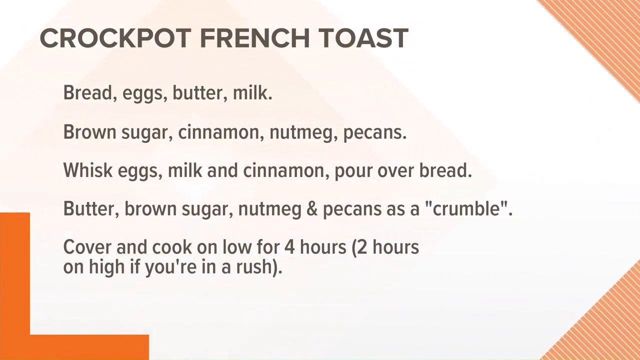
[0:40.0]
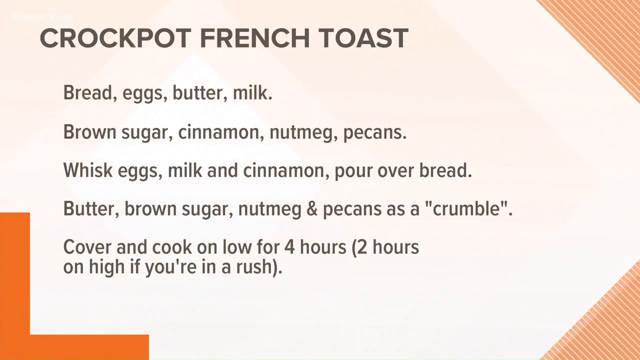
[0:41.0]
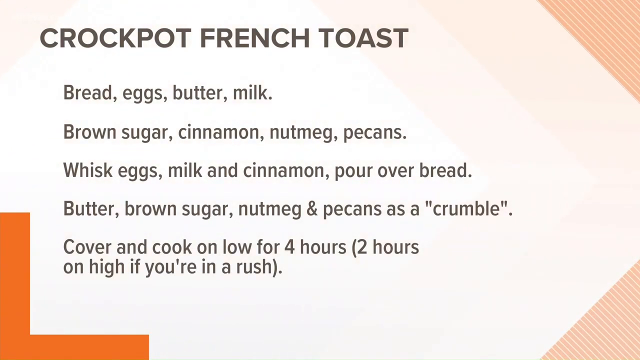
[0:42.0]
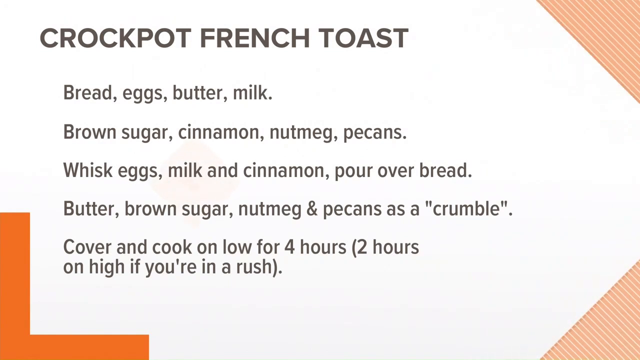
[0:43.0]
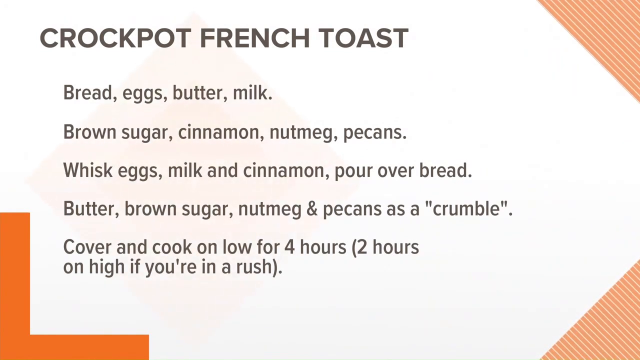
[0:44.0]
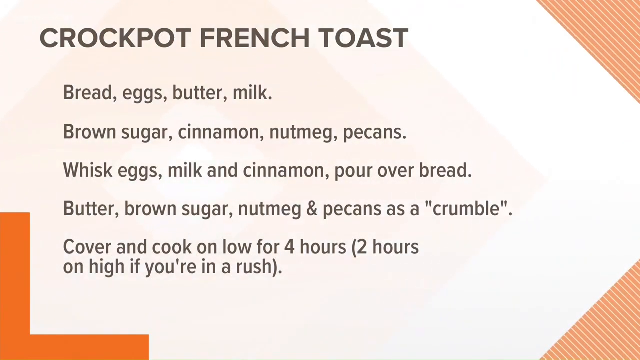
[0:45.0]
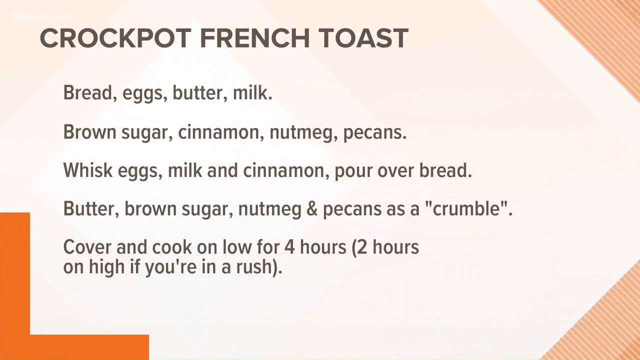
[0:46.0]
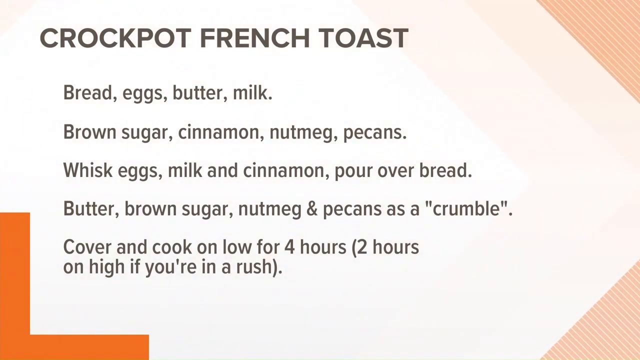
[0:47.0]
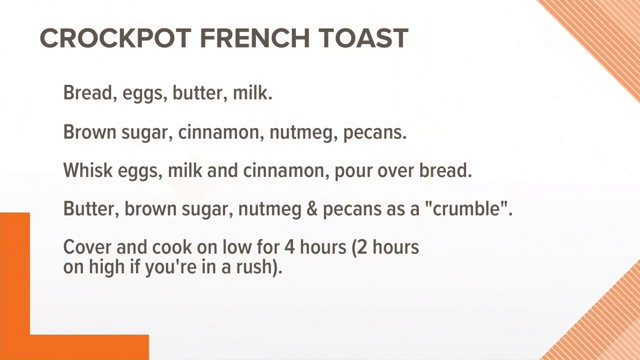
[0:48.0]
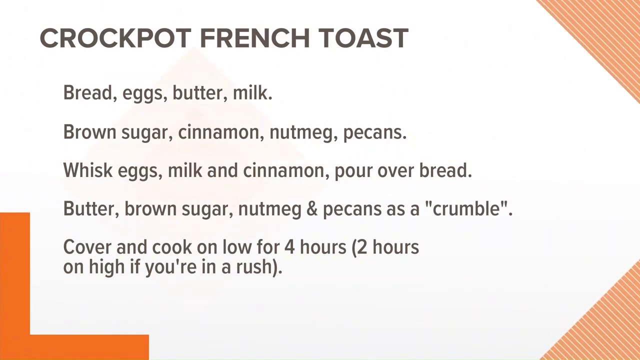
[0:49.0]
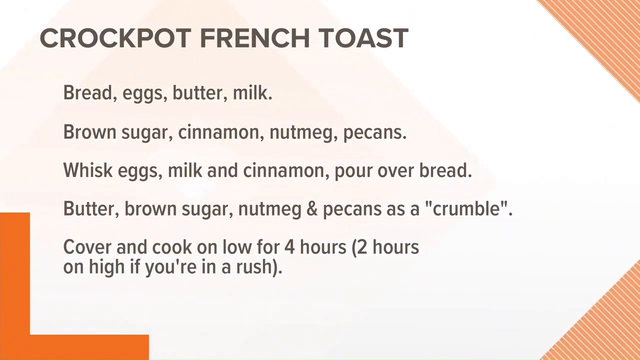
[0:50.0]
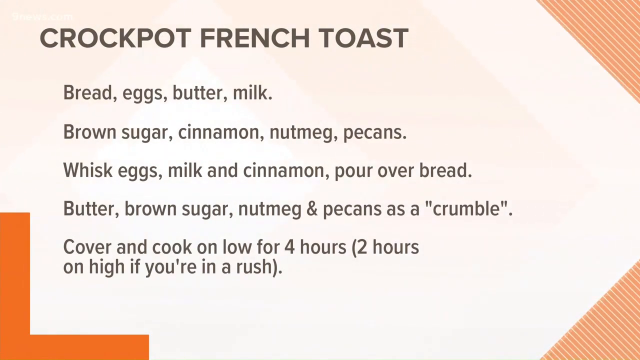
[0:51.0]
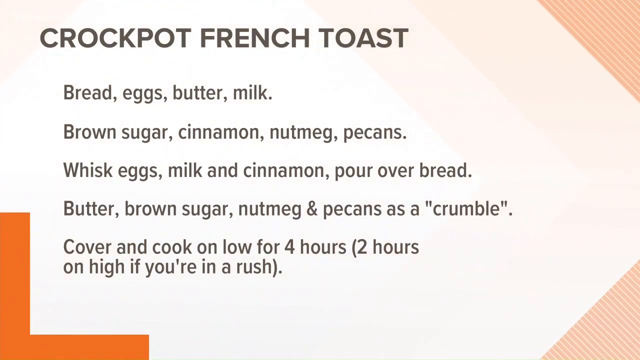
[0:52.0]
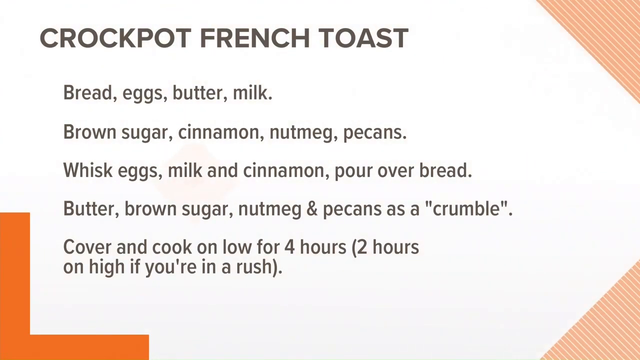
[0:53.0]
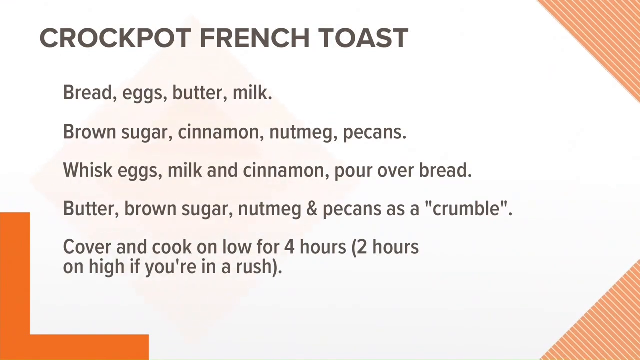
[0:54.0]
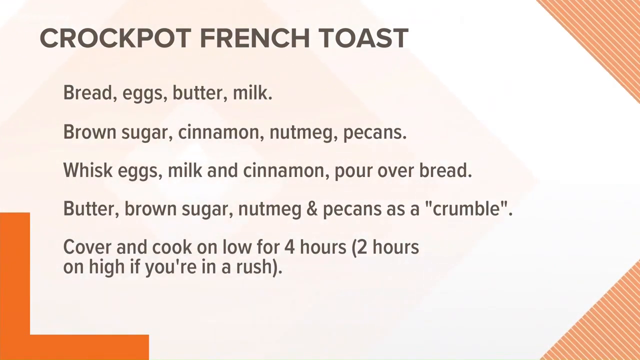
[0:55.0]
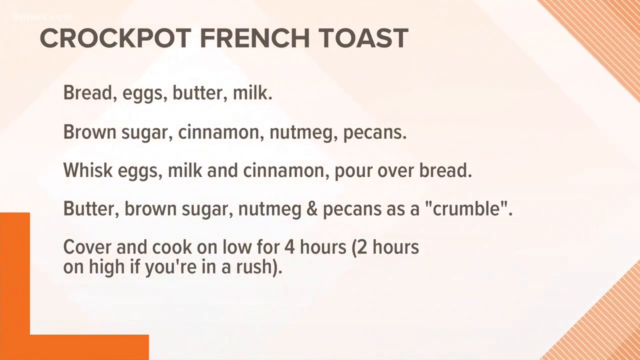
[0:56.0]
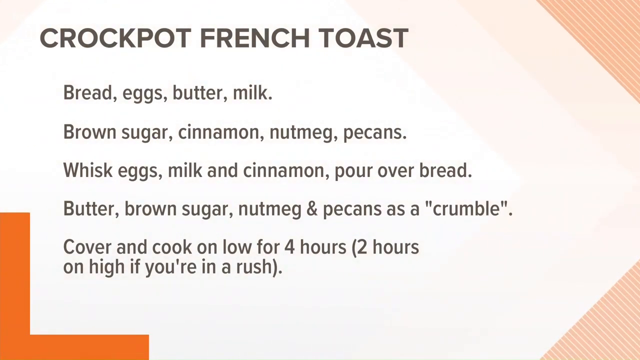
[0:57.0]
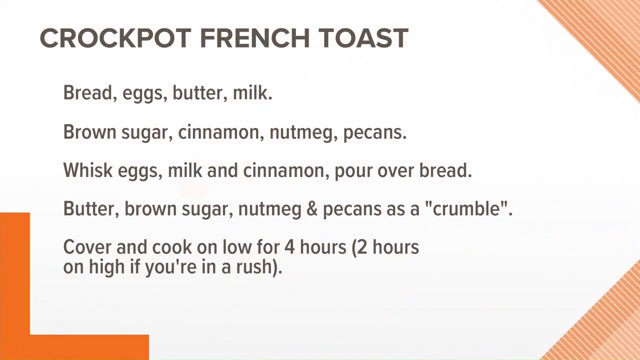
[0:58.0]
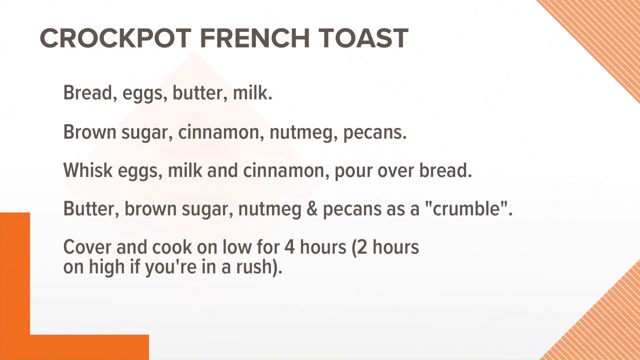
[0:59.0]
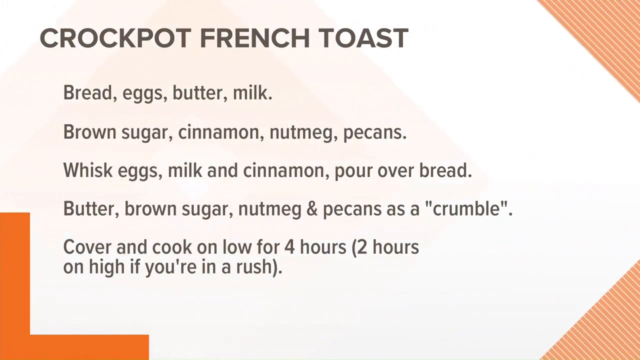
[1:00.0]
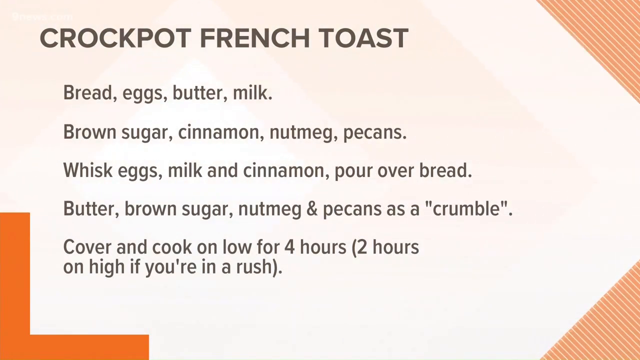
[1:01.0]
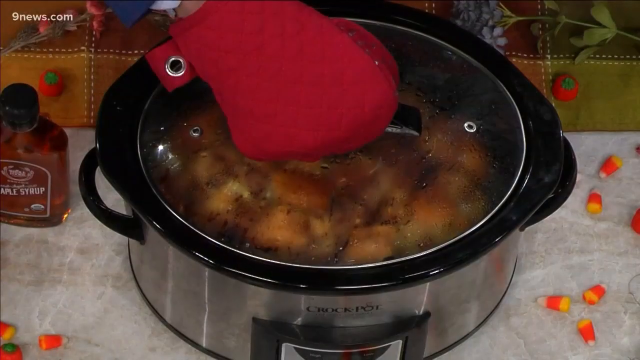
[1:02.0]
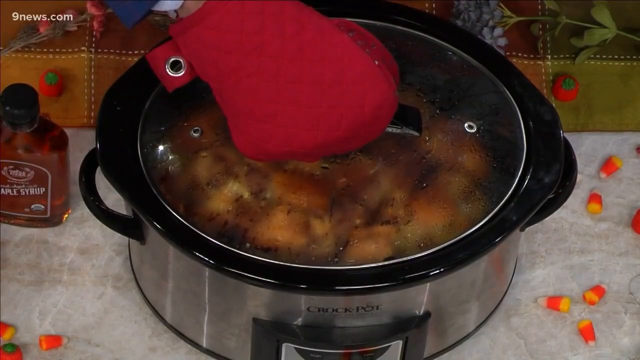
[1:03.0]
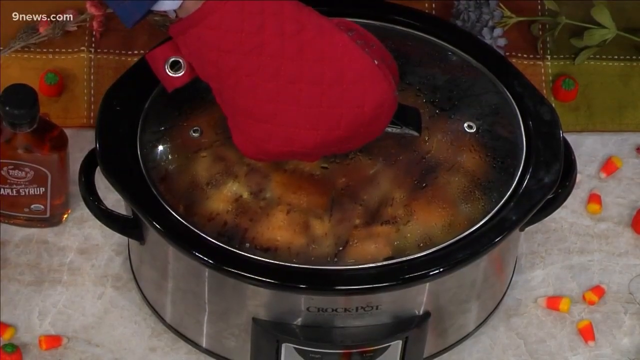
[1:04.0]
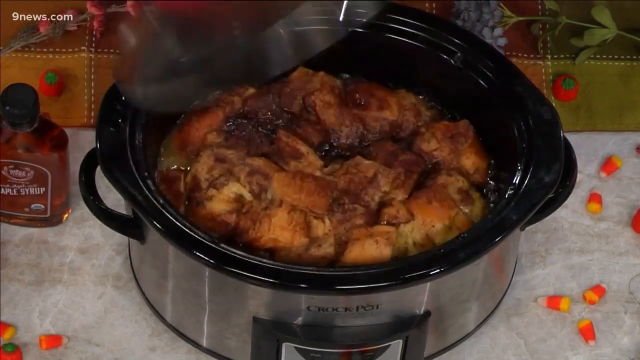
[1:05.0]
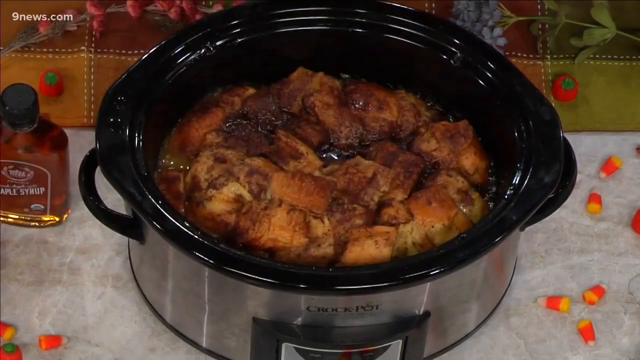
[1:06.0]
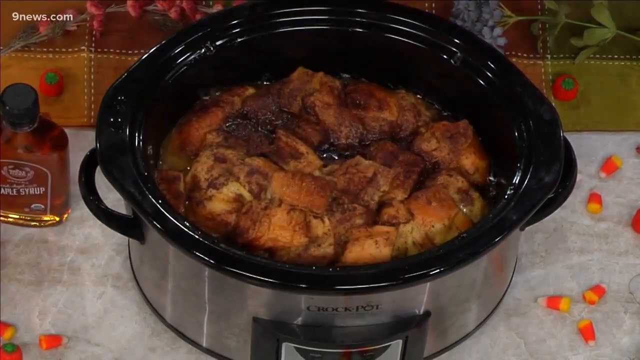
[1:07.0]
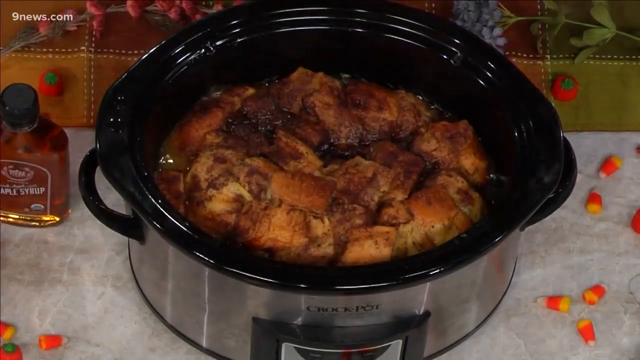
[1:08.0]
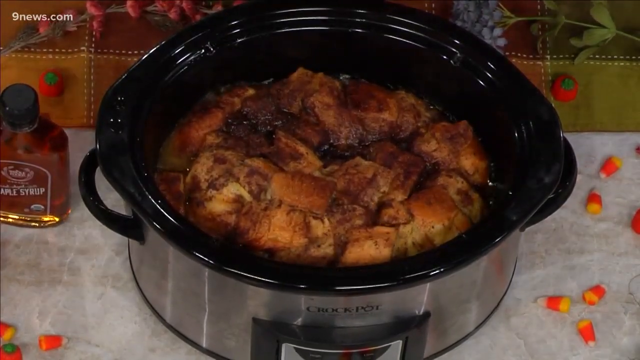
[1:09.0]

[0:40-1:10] The recipe remains on the screen on a faint orange background, with an orange decoration in the right corner and in the lower right and lower left corners. The "Crockpot French Toast" text stays on screen for a while, clearly listing the ingredients: bread, eggs, butter, milk, brown sugar, nutmeg and a few more things. No cooking duration is shown, and there are no instructions or quantities, just a list of about five different ingredients.